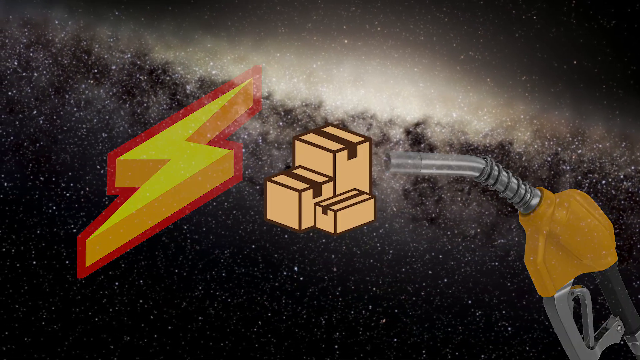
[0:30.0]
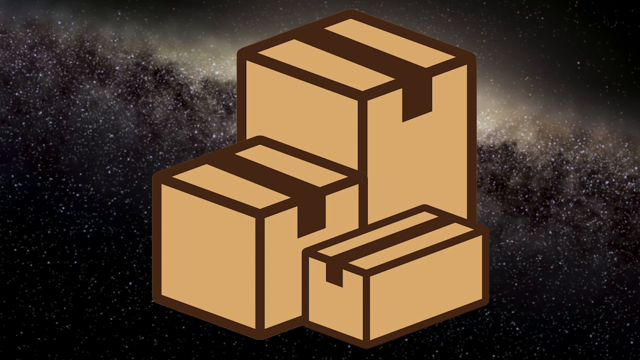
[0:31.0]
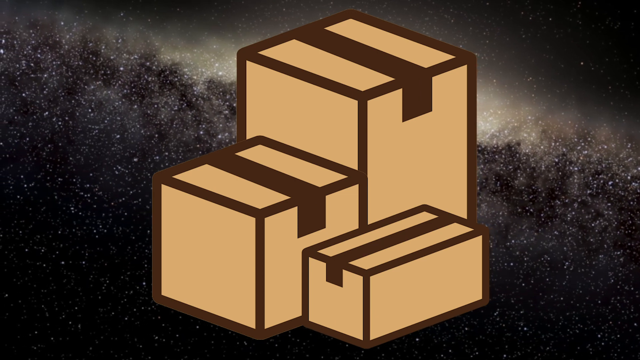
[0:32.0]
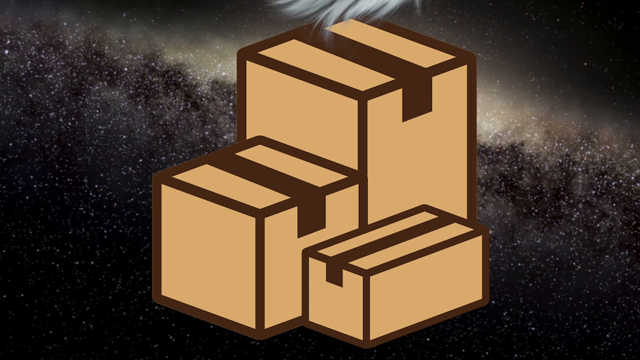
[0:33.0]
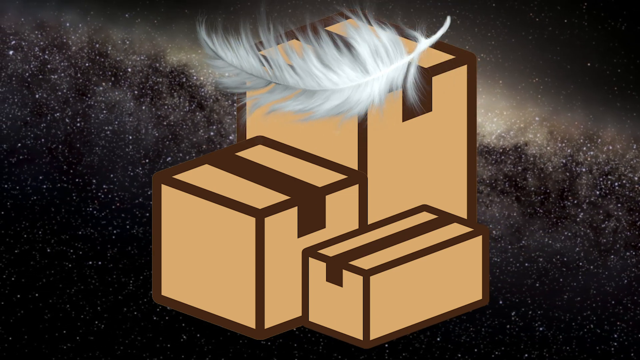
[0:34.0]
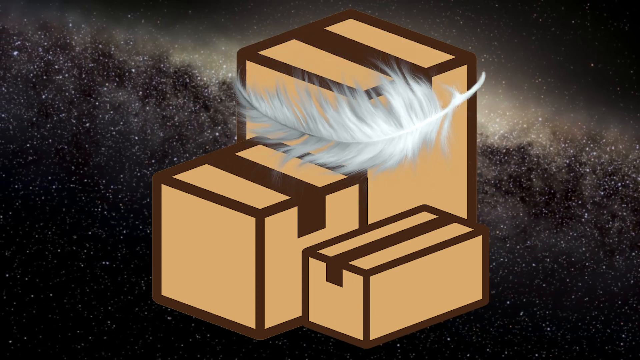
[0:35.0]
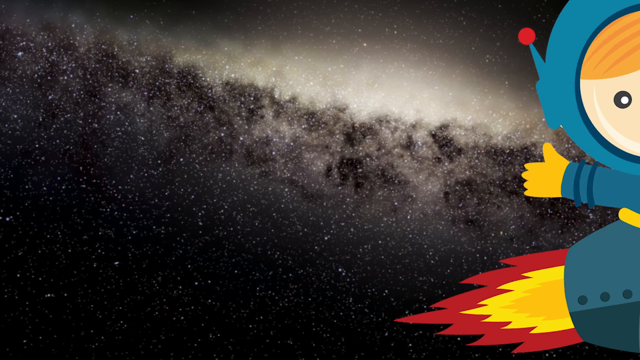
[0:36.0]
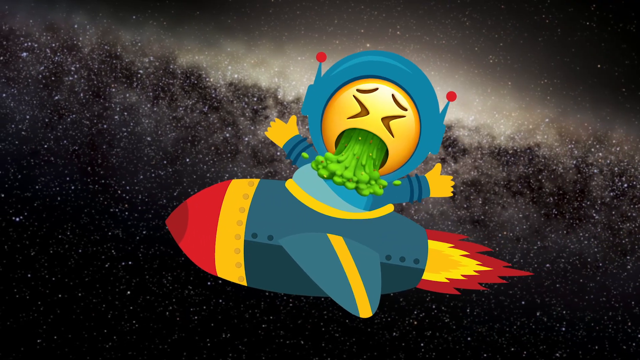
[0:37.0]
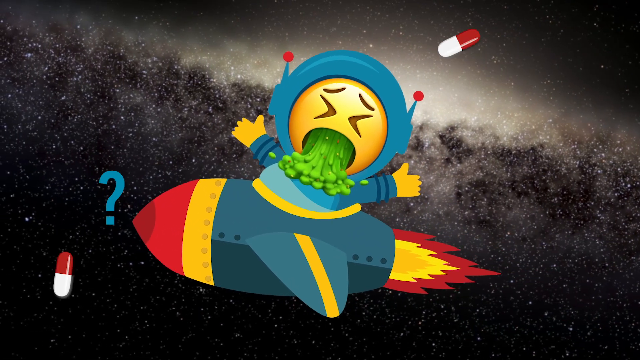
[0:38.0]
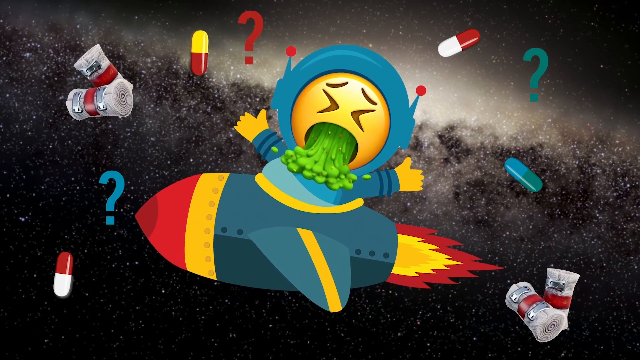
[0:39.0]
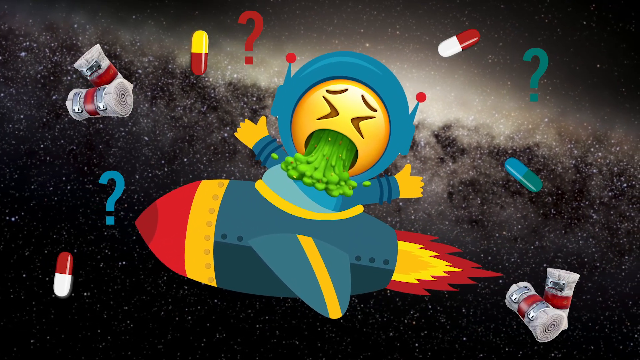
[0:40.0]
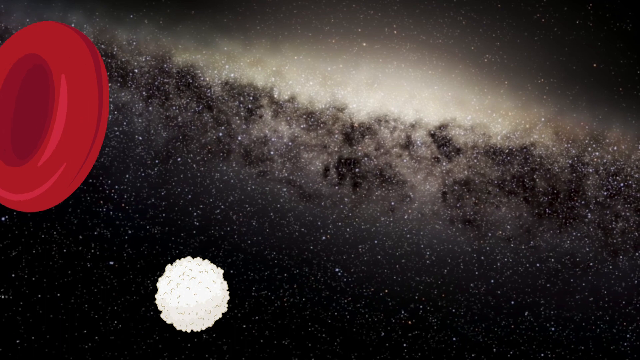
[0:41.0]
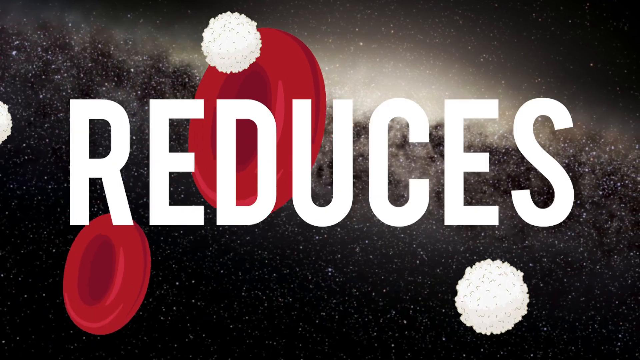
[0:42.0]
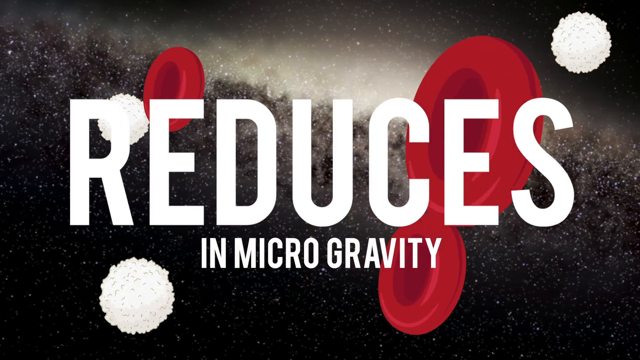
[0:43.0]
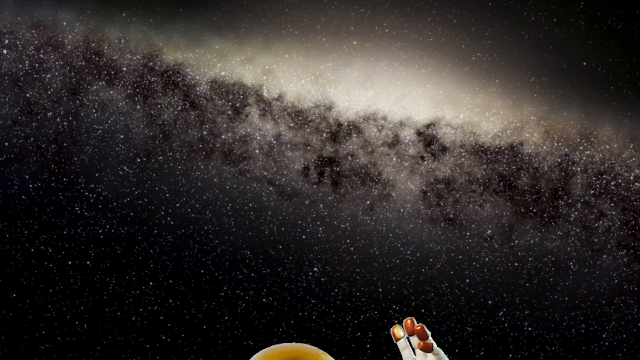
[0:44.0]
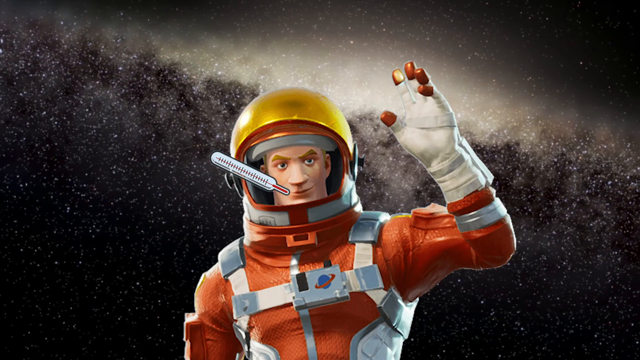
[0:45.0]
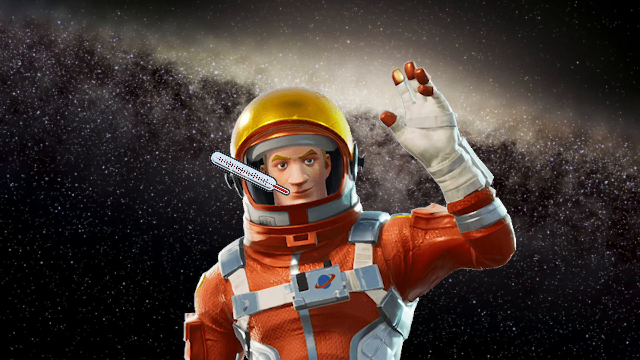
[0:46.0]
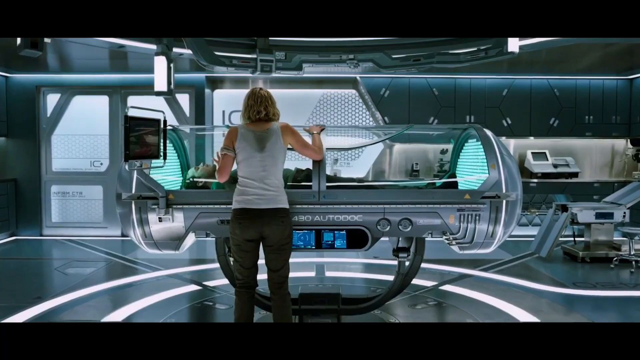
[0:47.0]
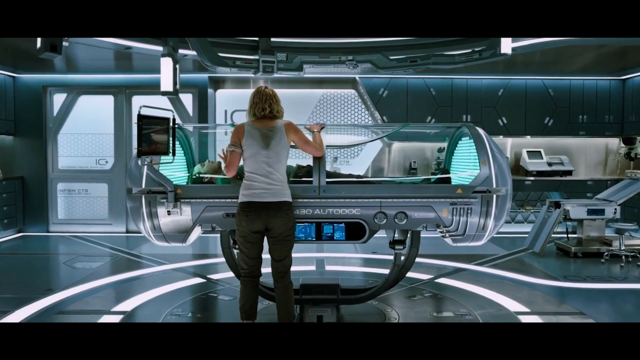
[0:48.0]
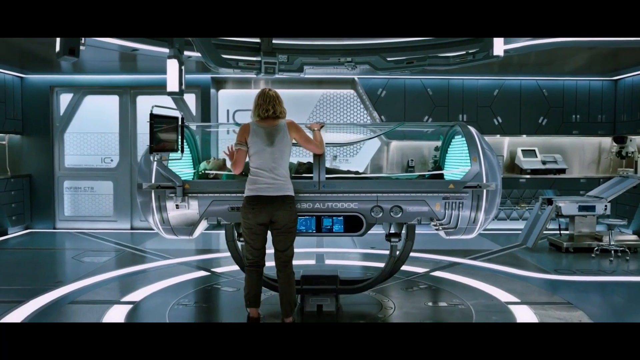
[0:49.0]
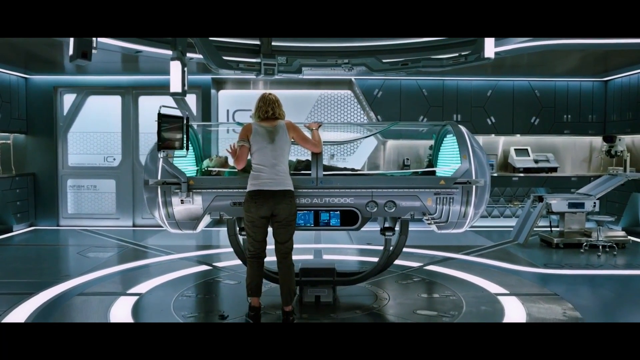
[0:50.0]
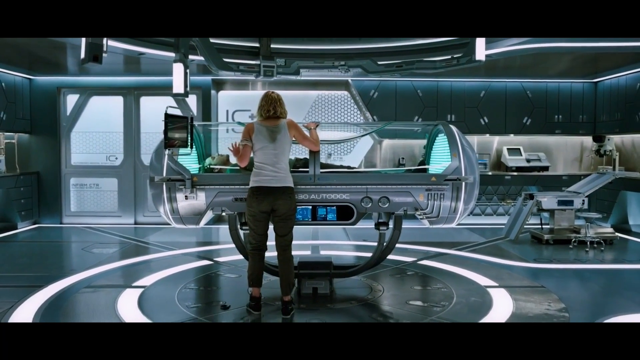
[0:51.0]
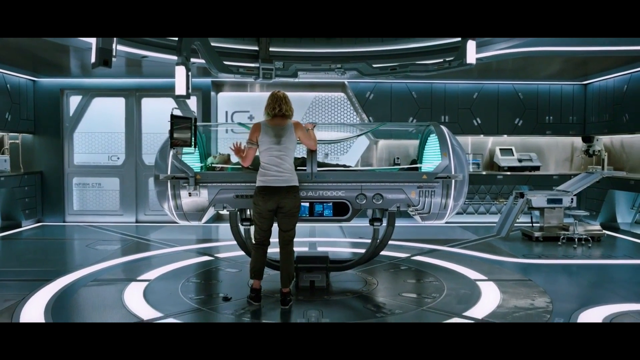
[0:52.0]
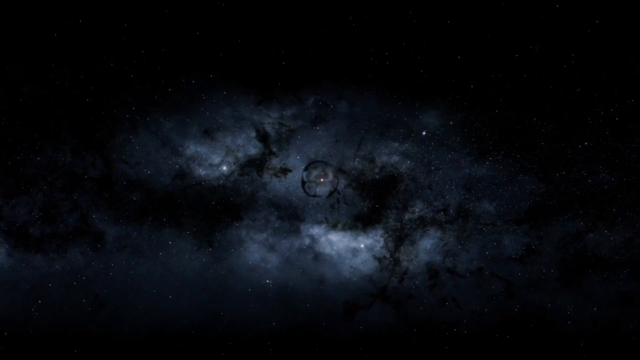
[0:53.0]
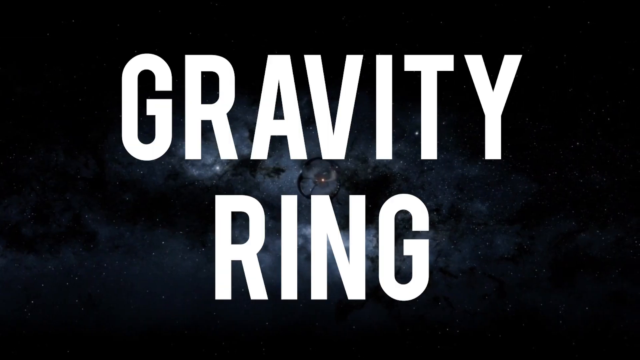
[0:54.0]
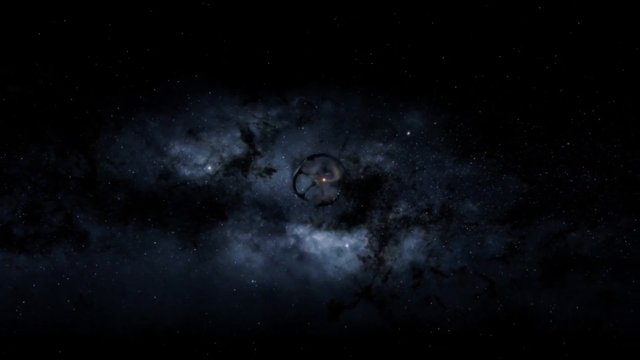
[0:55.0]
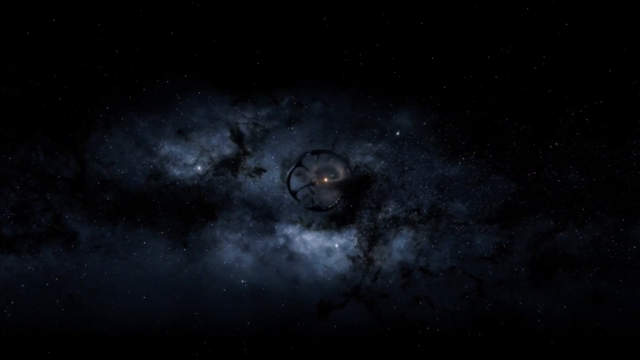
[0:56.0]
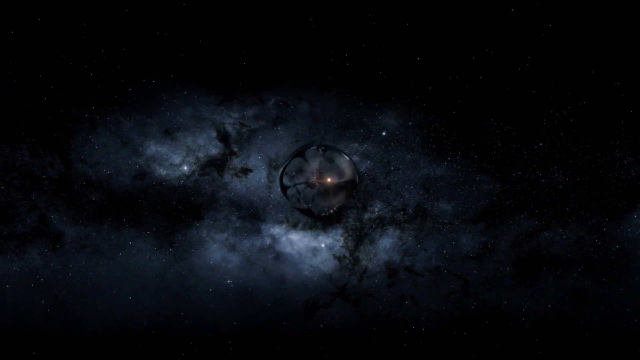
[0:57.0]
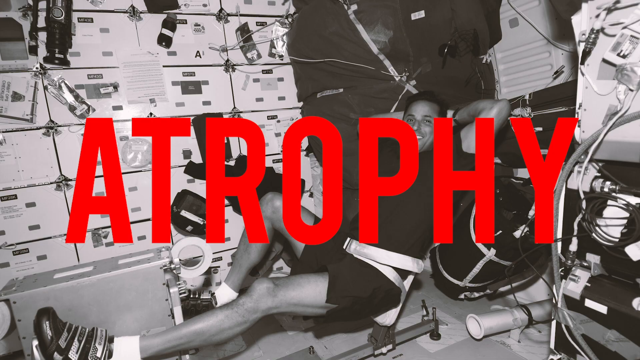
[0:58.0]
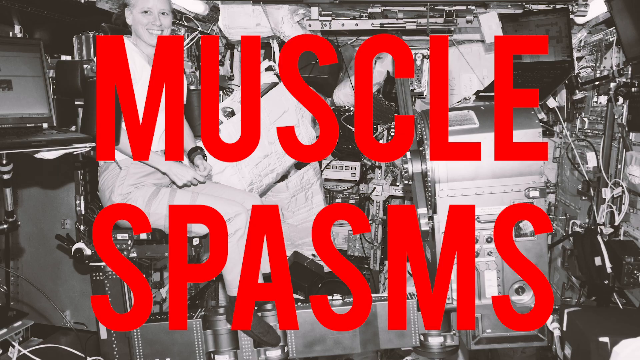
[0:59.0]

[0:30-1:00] Three light brown boxes appear in the center and grow large as the images on the left and right sides disappear. A white feather floats down from the top. An image of what looks like a rocket appears with a little boy wearing a suit; it flies to the right, then to the left, then settles in the center. The boy's face changes to a throwing-up emoji that throws up green liquid, and many items appear around the rocket and the emoji, including pills and rolled gauze pads. The scene changes to red blood cells coming from the left side along with what look like white blood cells, and large text in the middle reads "reduces in gravity". From the bottom, an image of a man in a spacesuit appears with a thermometer placed next to his mouth; the image disappears and the words "this means" appear. The scene changes to what looks like a scene from a movie: a woman stands next to a clear capsule with a human in it, in some sort of laboratory. She looks like she is crying, and the person in the capsule looks like they are sleeping. Next comes an image of outer space with the words "gravity ring" very large in the middle. The words disappear and something circular floats in the middle of space. A black and white image shows a person in a space station or space center, and the word "atropathy" appears very large in a red font. Another black and white image shows a woman in a space station with the large red words "muscle spasms". Another black and white image shows a man in a space station with the words "loss of fine motor control".